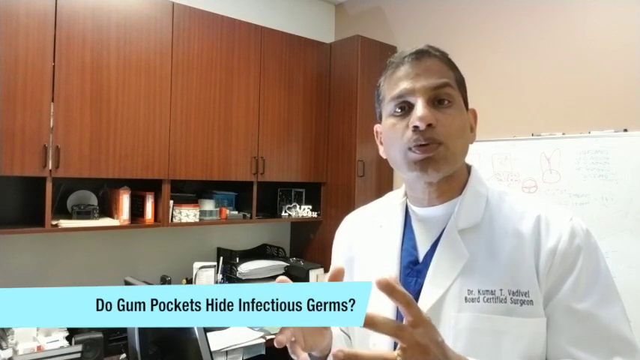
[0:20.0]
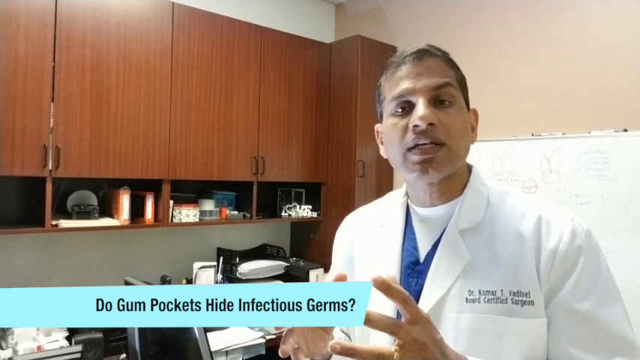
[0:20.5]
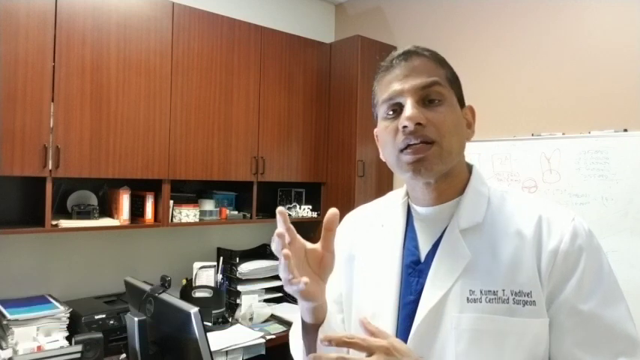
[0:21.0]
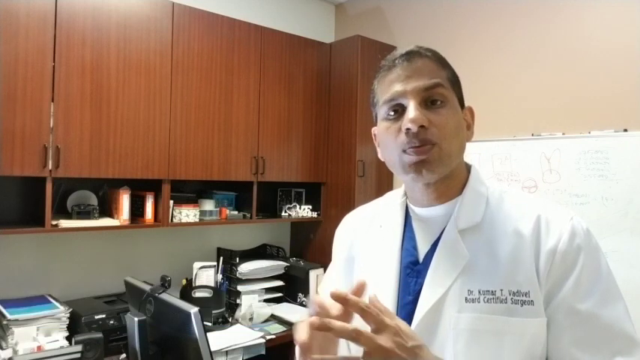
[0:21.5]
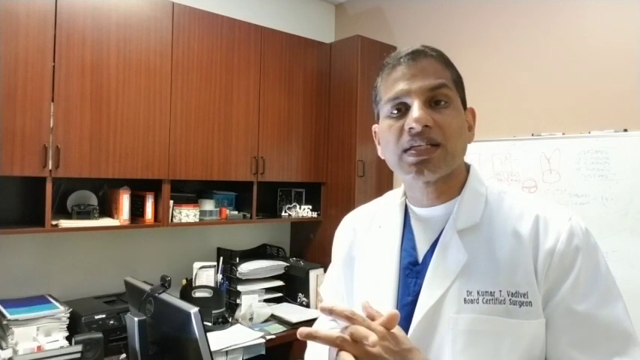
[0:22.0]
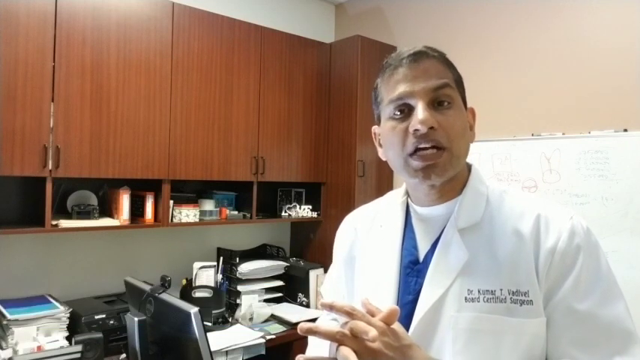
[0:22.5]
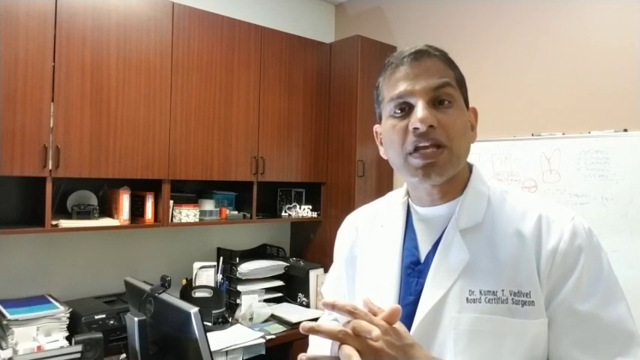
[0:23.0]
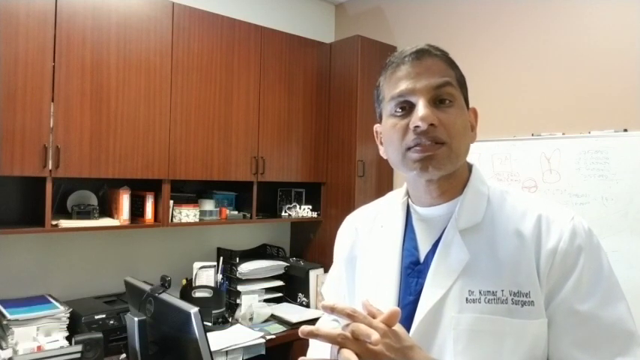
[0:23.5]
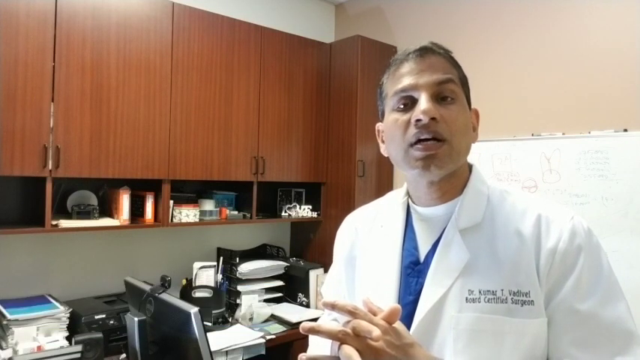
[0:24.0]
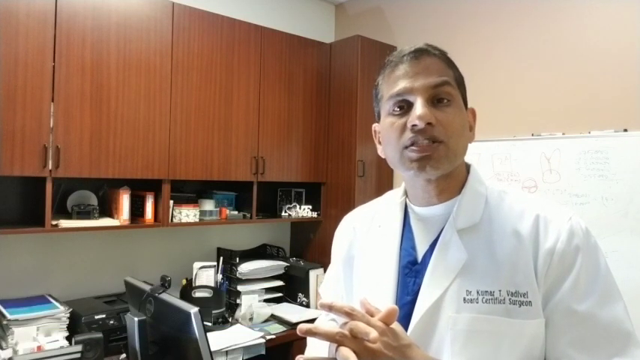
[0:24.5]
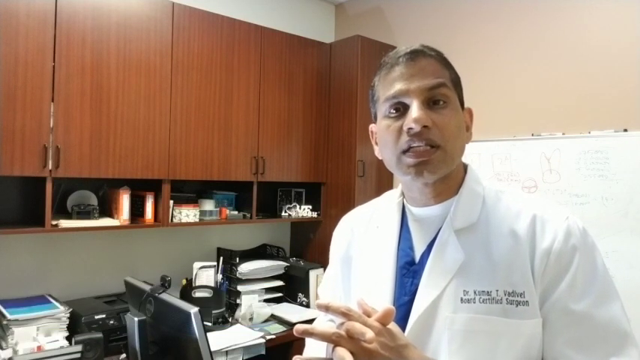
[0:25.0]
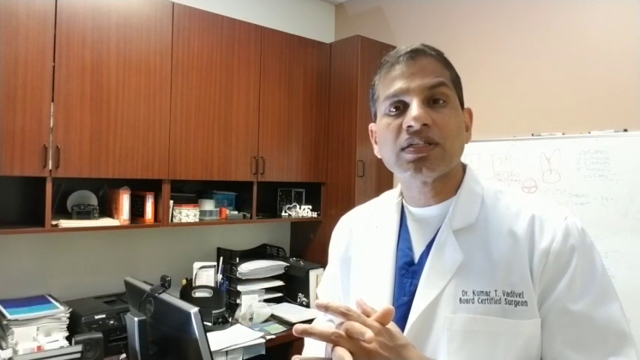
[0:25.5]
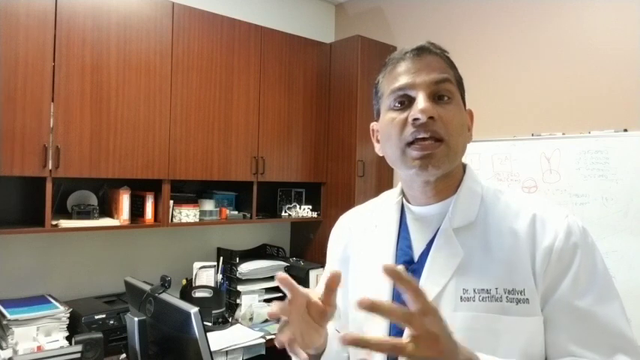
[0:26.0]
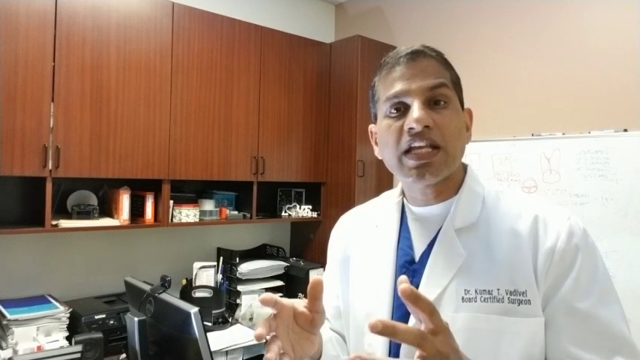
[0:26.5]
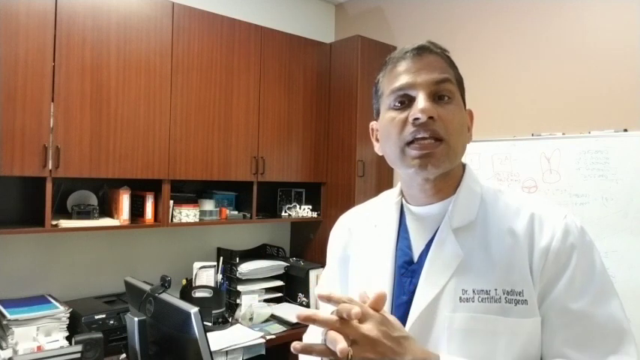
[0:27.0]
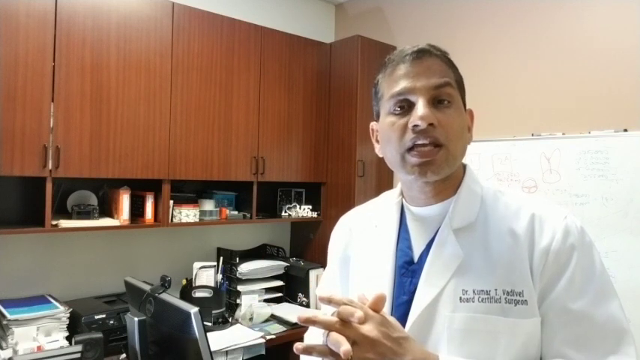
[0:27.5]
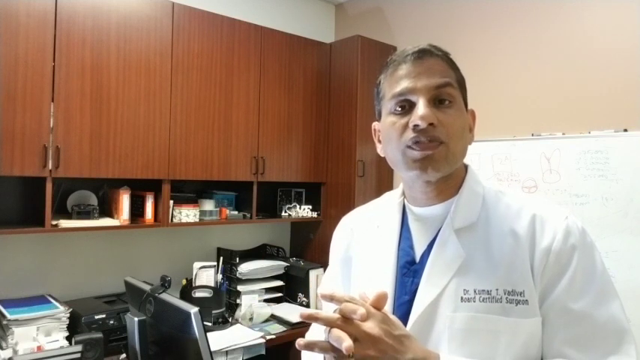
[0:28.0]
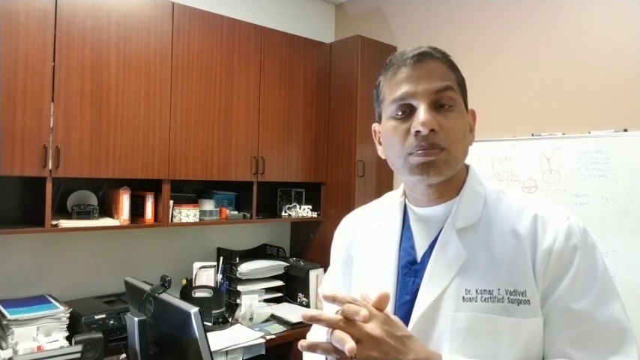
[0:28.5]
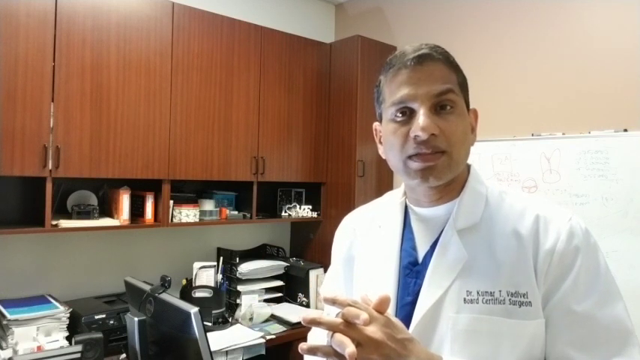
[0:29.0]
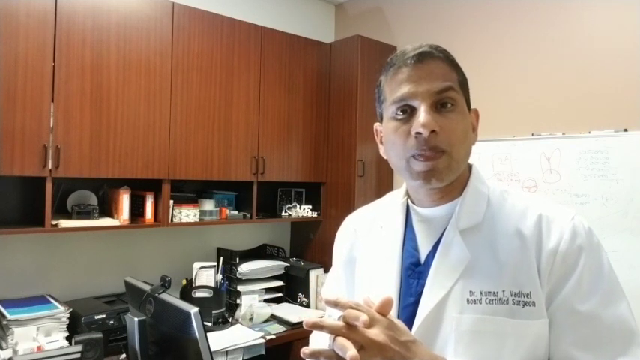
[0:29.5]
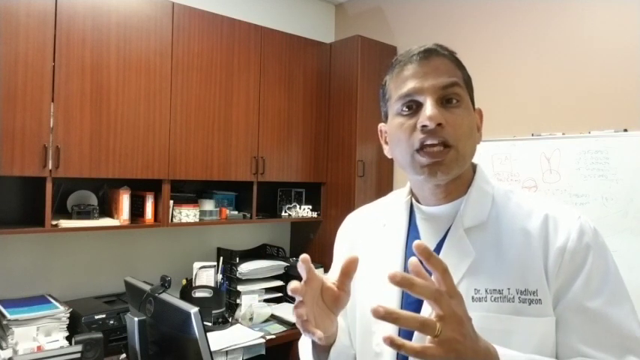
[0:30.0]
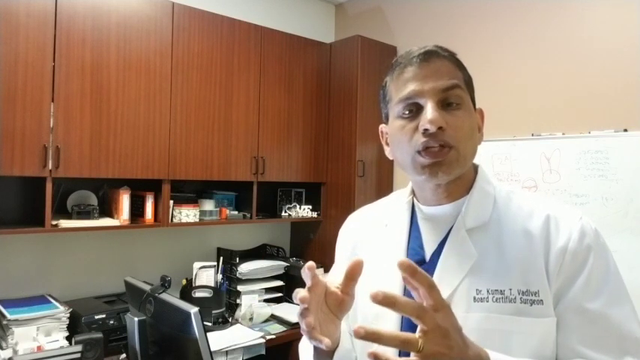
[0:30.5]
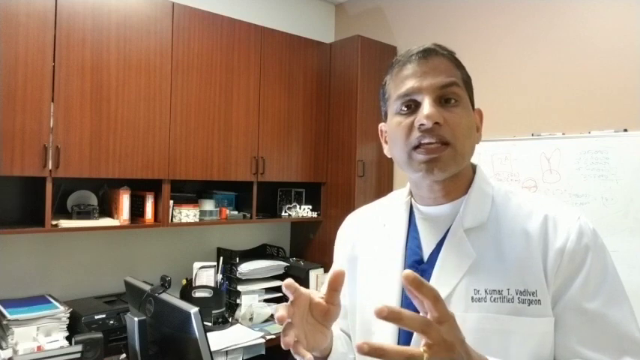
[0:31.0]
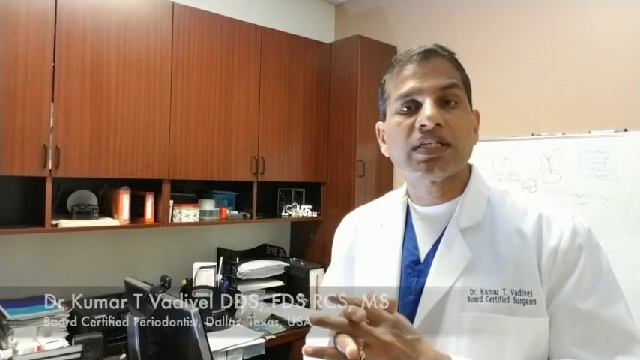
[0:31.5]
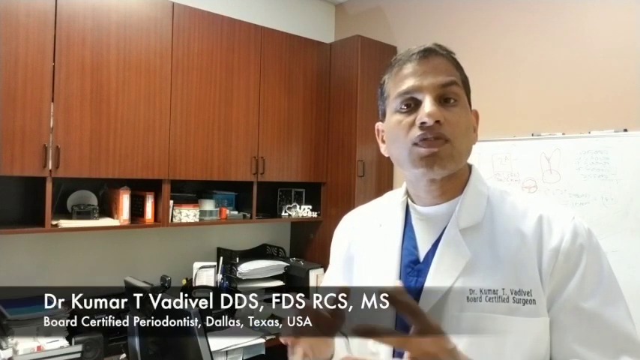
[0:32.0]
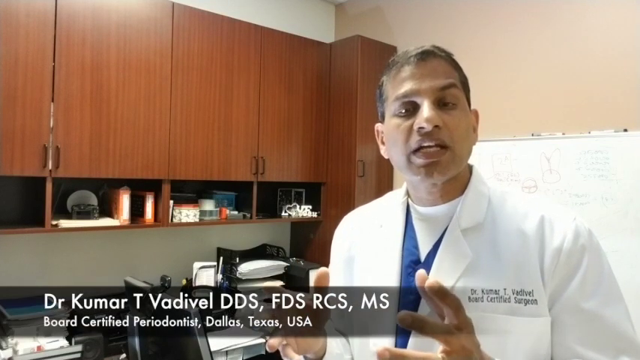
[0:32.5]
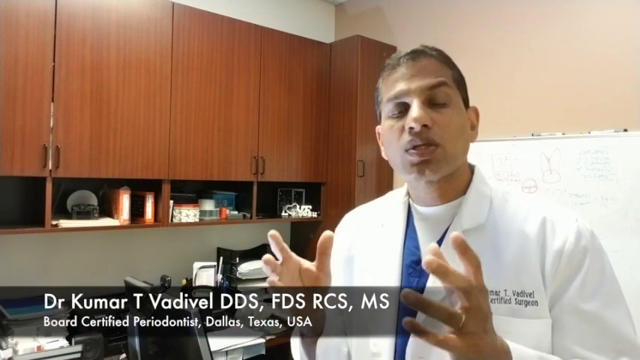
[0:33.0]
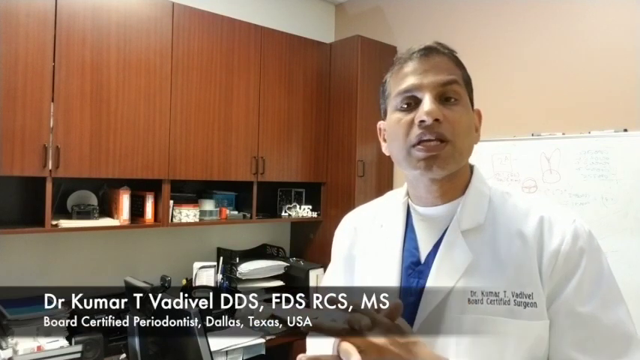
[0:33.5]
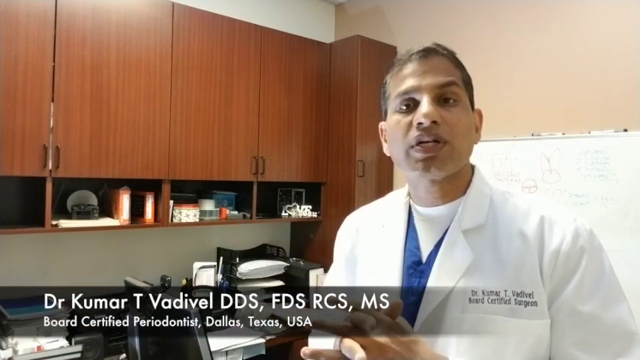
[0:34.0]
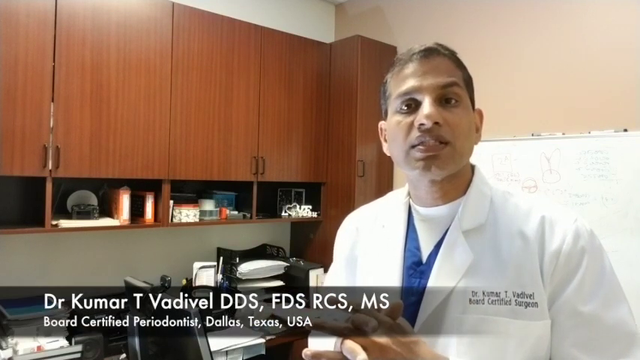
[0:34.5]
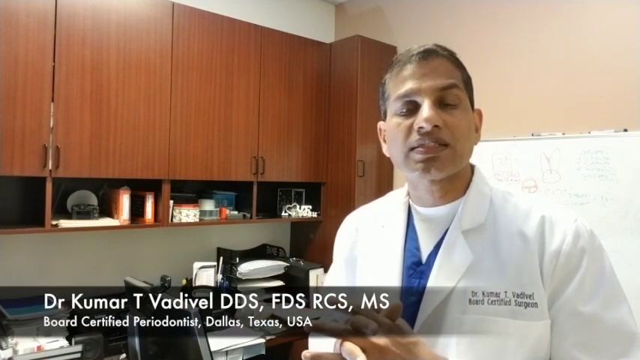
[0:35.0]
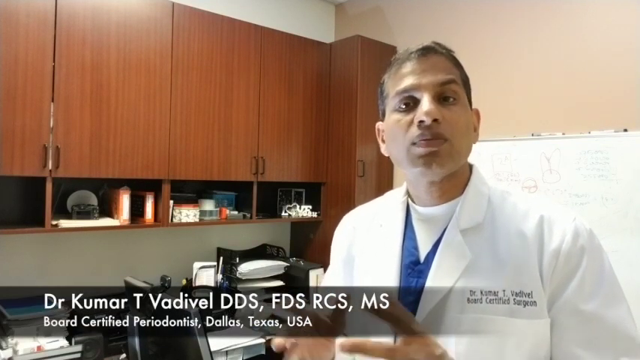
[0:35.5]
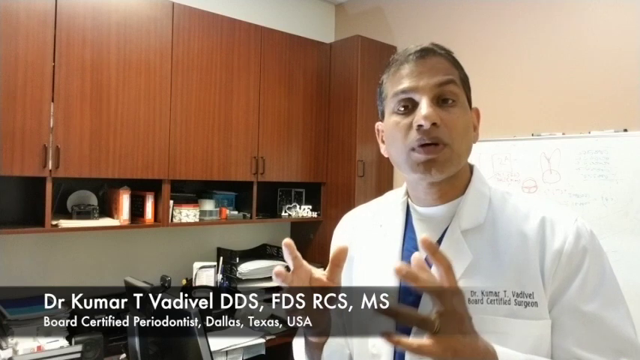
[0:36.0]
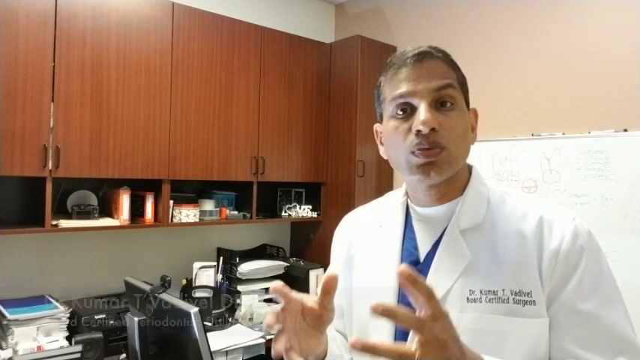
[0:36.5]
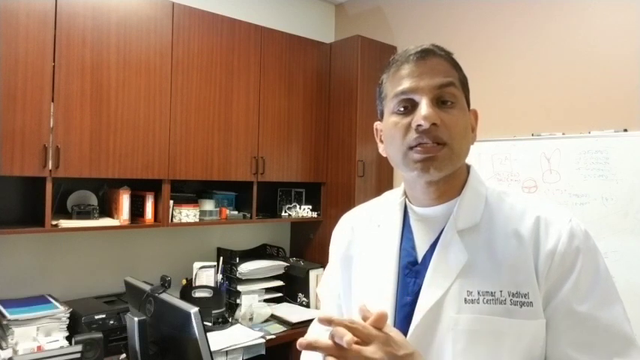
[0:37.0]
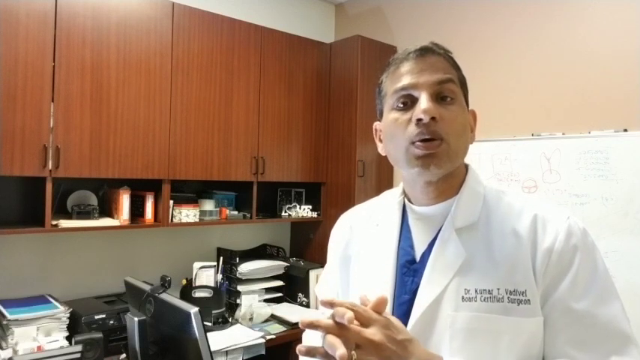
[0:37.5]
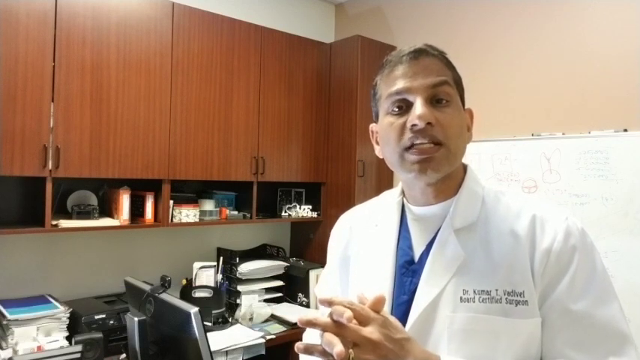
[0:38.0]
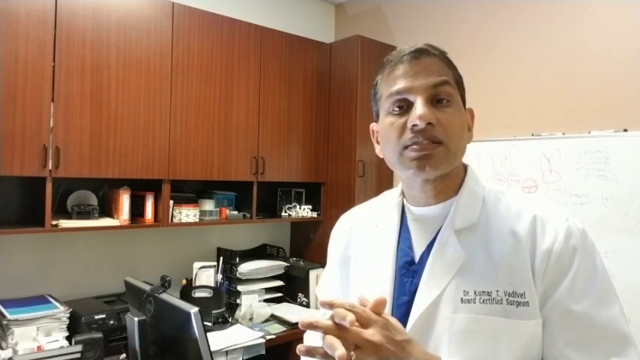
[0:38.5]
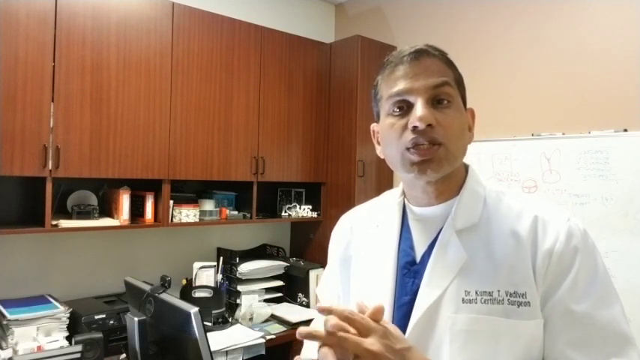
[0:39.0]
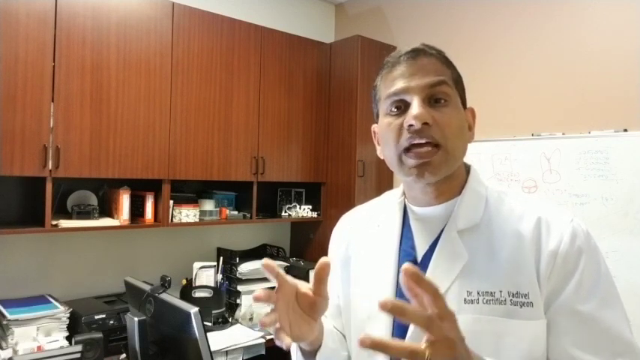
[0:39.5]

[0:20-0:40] A dentist, Dr. Kumar T. Vadivel, talks to the camera. He wears a white lab coat over blue scrubs with a white t-shirt under that. He is standing in an office with brown veneer wooden cabinets fastened to the wall and a computer monitor with a webcam above it. At the bottom left of the screen, a blue stripe carries black title text reading "Do gum pockets hide infectious germs?" He has his hands clasped in front of him and occasionally separates them as he speaks, as if to make a point. Text appears at the bottom right reading "Dr. Kumar T. Vadivel, DDS, FDS, RCS, MS, Board Certified Periodontist, Dallas, Texas, USA". He continues talking with his hands clasped, occasionally separating them. A whiteboard is visible behind him, and to the left of him are a computer with a webcam and various in and out trays filled with papers.